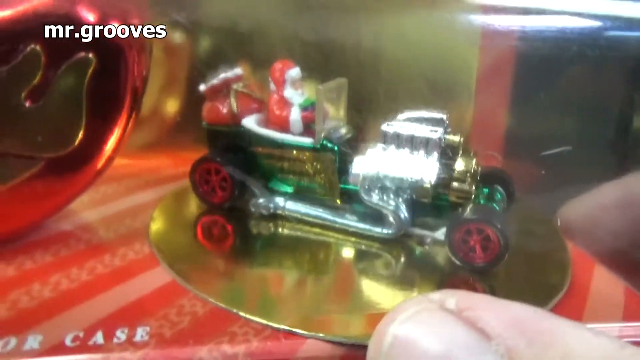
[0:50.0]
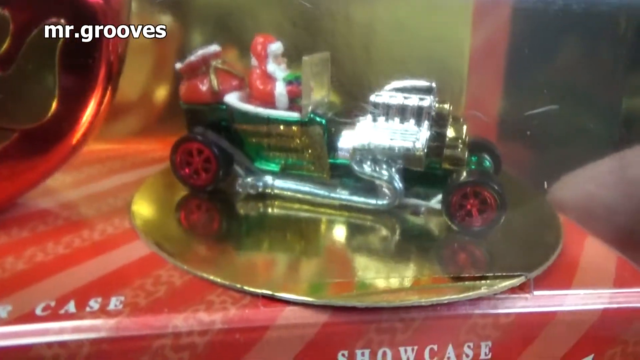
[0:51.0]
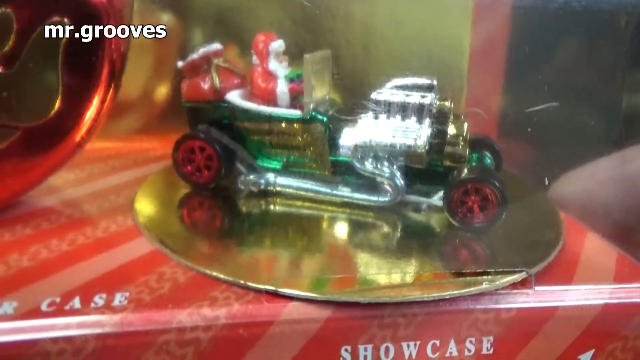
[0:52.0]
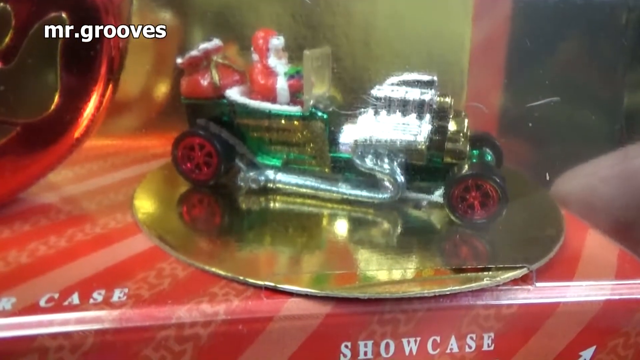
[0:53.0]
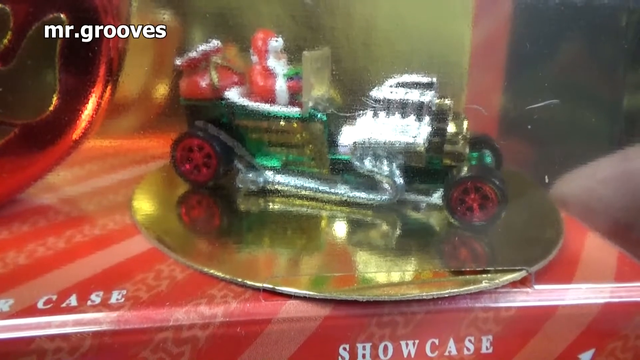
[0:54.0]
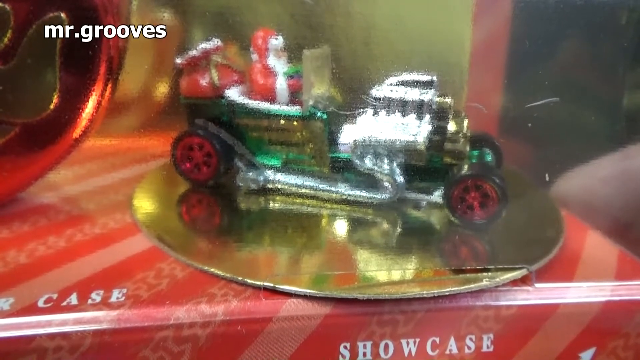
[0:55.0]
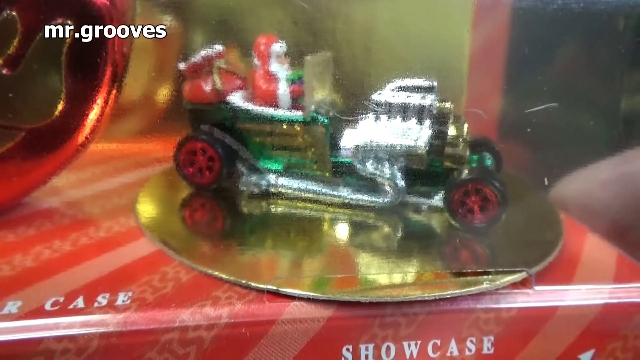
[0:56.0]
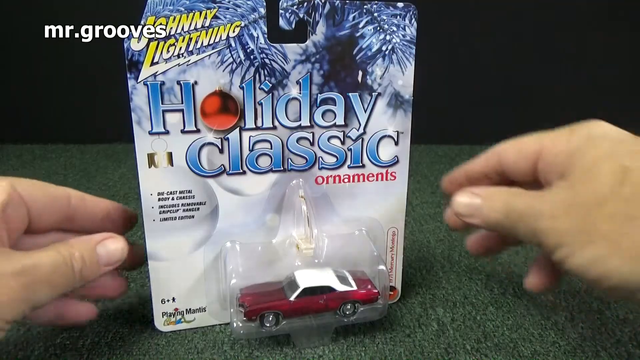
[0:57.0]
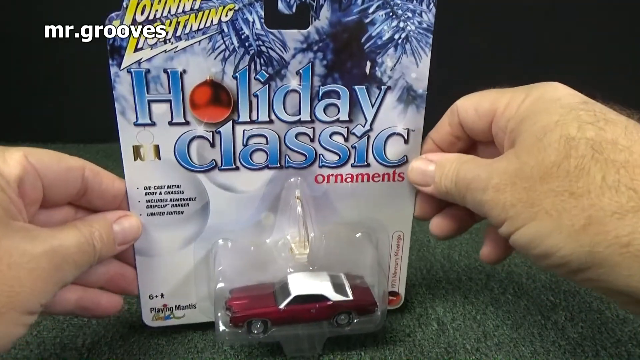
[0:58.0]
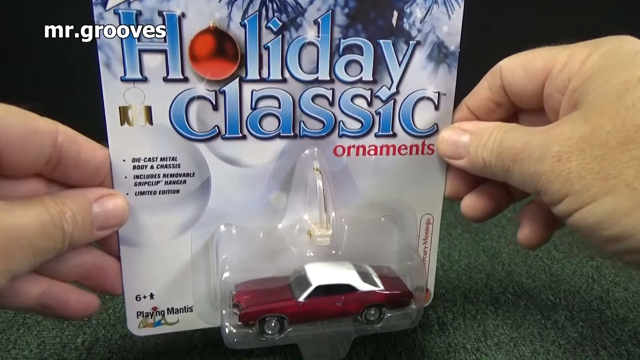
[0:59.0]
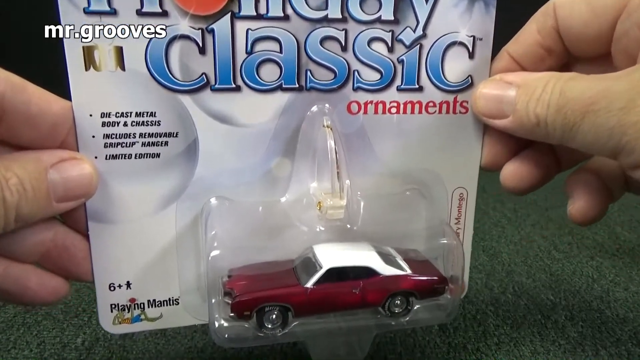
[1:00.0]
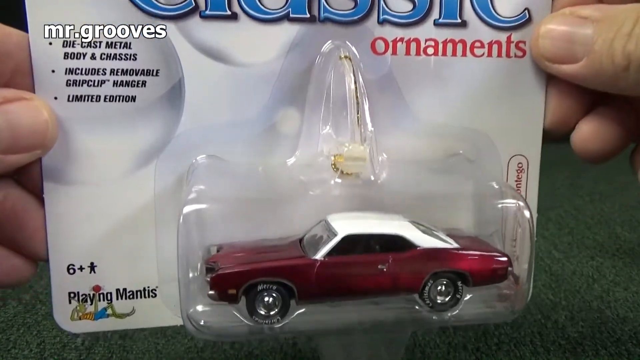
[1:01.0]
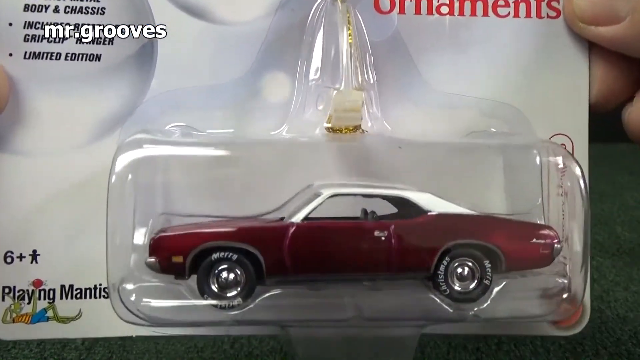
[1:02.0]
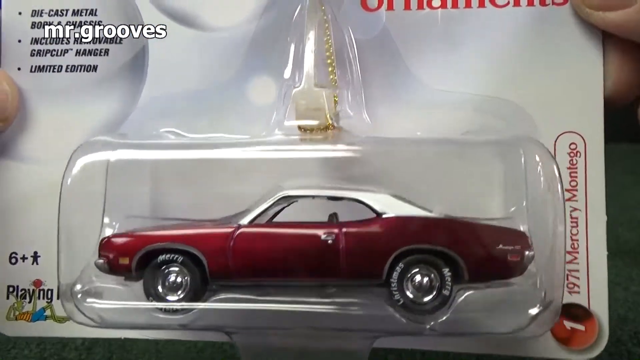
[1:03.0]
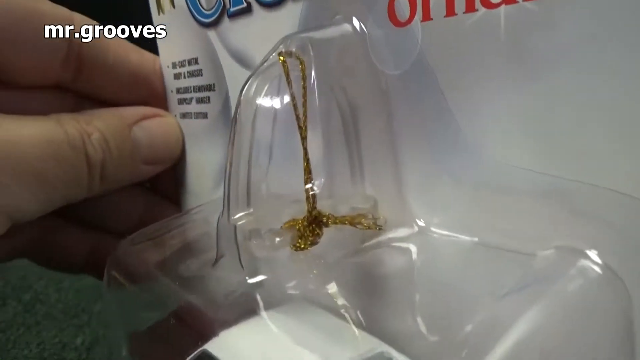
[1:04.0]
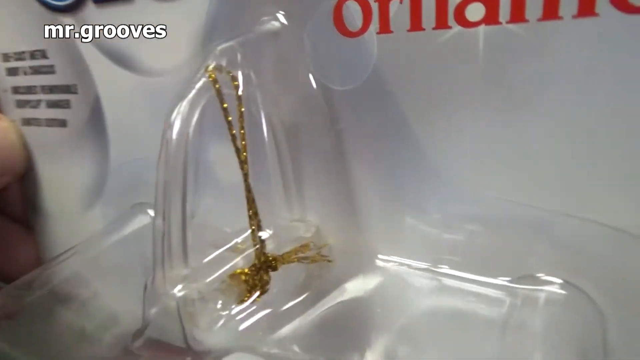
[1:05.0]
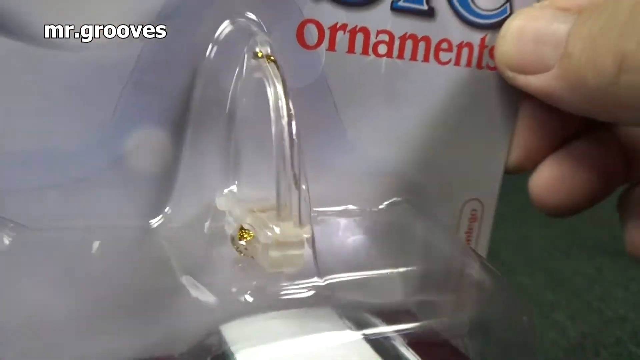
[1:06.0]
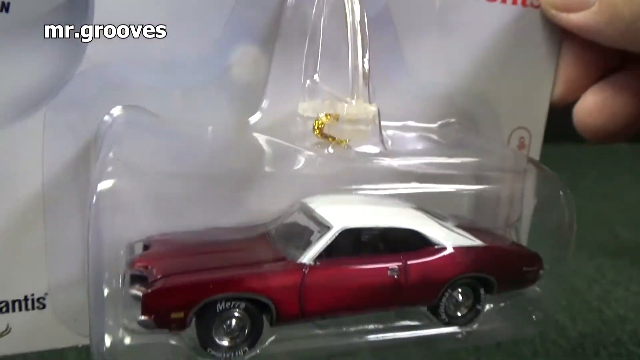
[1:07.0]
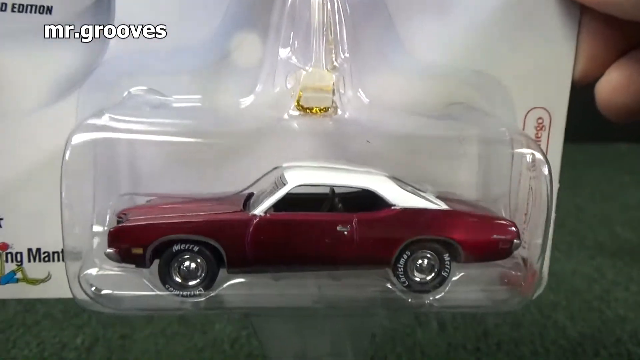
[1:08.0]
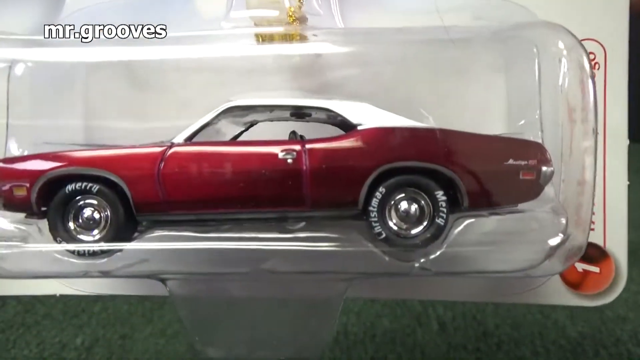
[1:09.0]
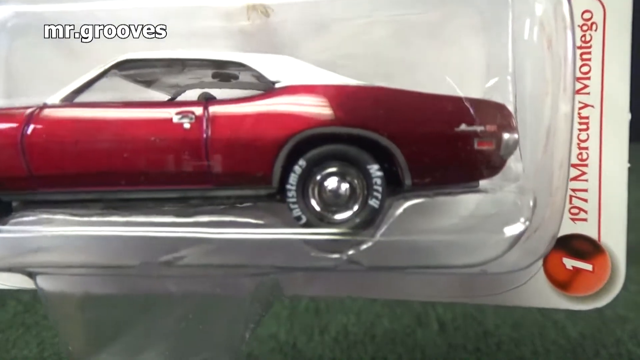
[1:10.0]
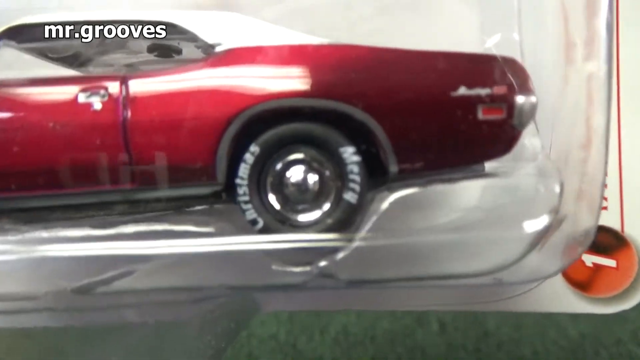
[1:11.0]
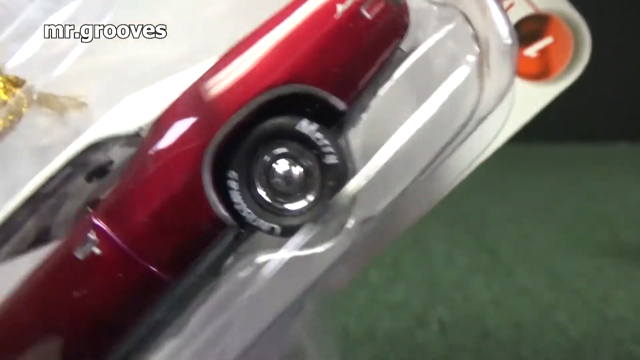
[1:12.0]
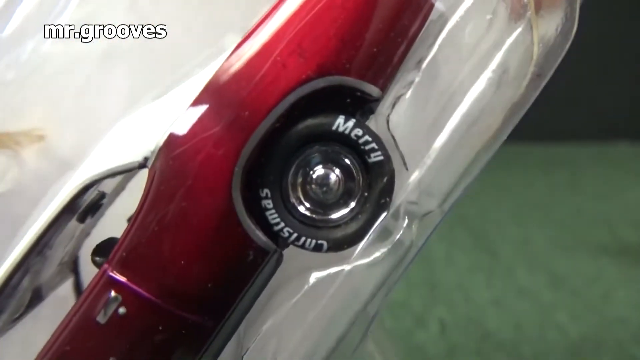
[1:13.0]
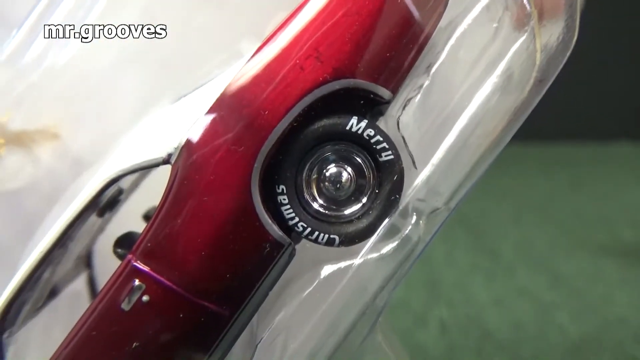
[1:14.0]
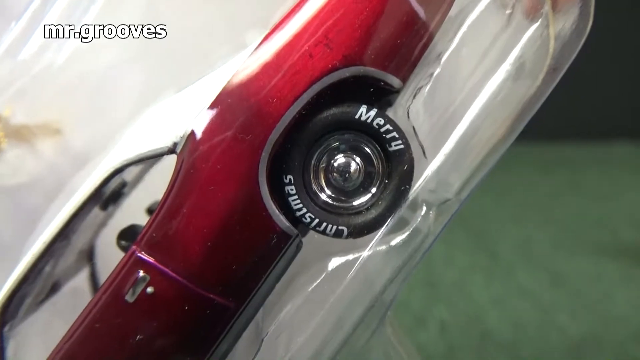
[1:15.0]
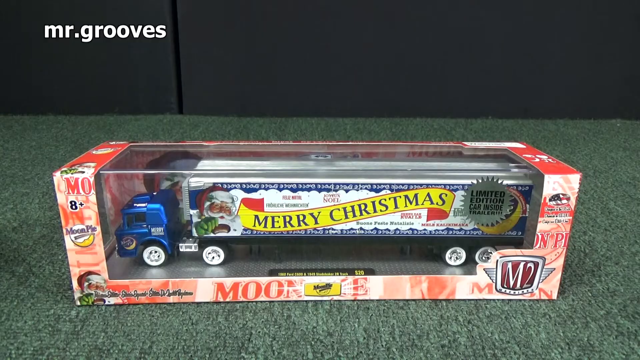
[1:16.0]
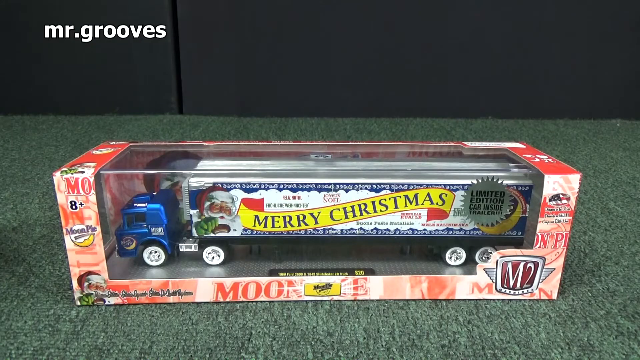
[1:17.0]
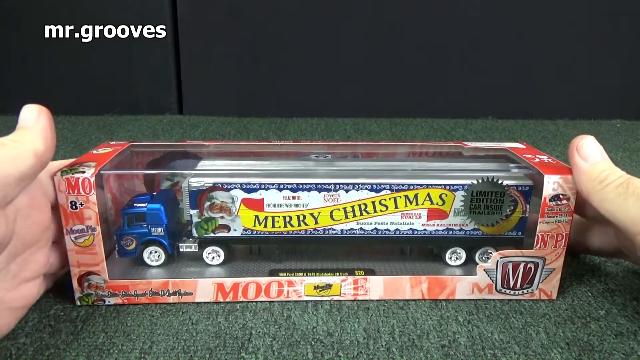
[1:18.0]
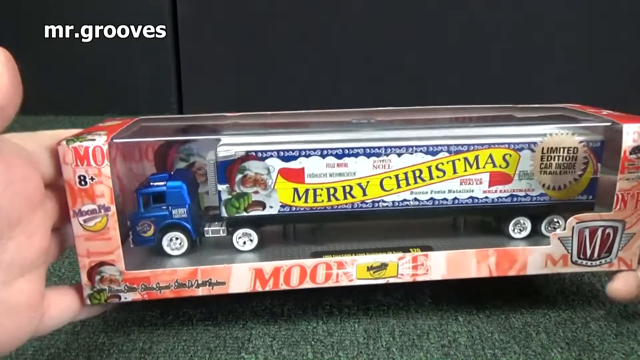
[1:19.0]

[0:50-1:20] A hand turns the golden platter with a green and silver car inside. Then another package containing a toy car is shown. It says "Holiday Classic Ornaments" in blue and red text. The red toy car is in a clear plastic package, and the background of the package has a blue and white winter-themed design with snow-covered pine branches and red ornaments. In the top left corner of the package, "Tony Lightning" is written. The view then zooms in on the package. Text on the left is in bullet form: the first bullet says "die cast metal body," the second says "include removable grip cap hangers," and the third says "limited edition." The car looks like it is for kids aged six and up. "Merry Christmas" is written in white on the wheels of the car. On the right side, the name of the car is written along with the number 1.